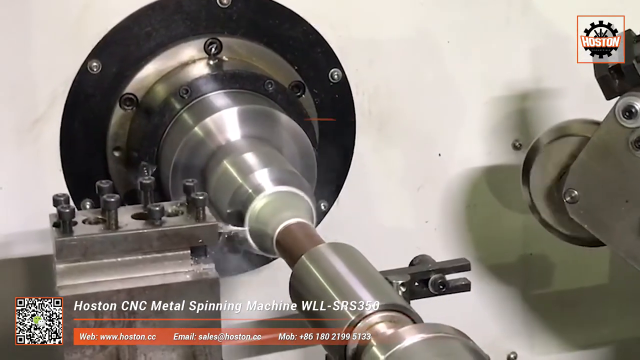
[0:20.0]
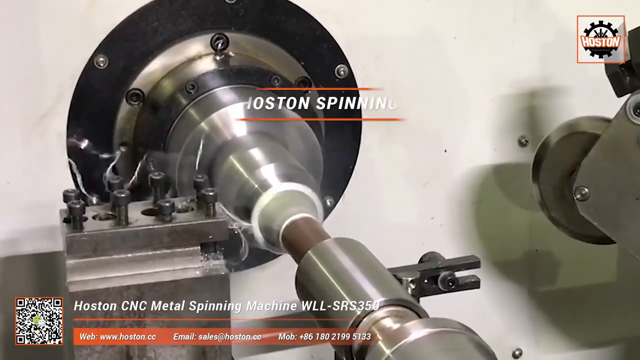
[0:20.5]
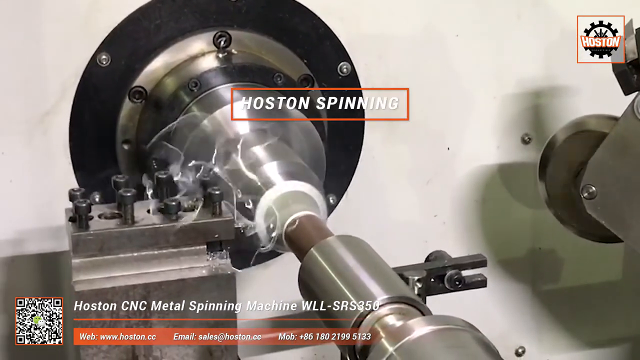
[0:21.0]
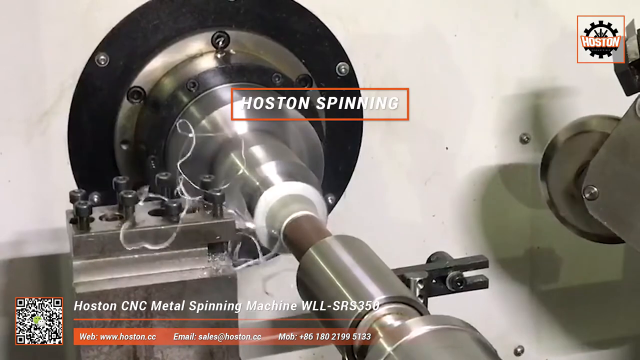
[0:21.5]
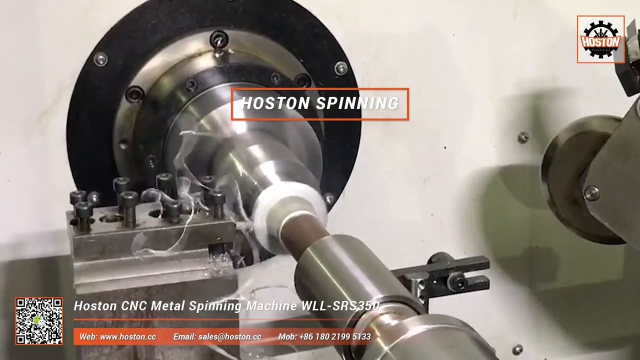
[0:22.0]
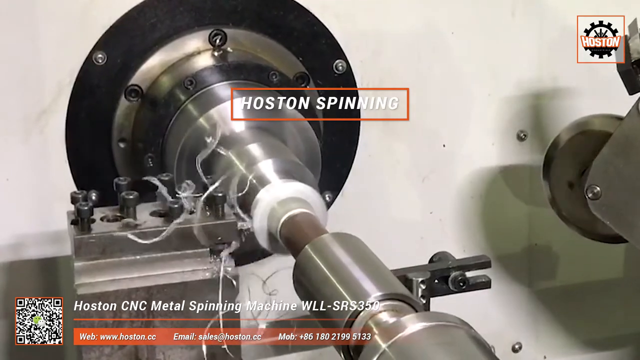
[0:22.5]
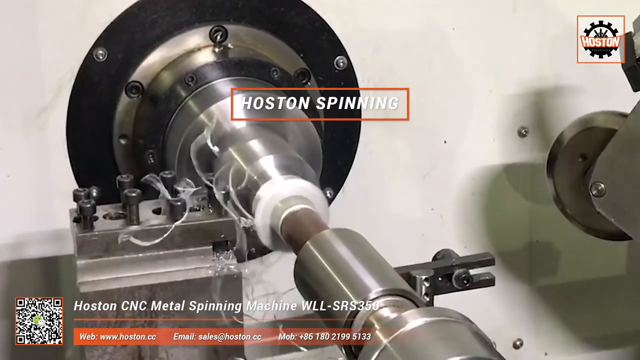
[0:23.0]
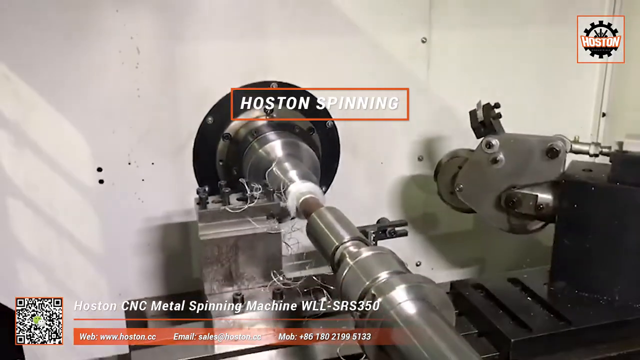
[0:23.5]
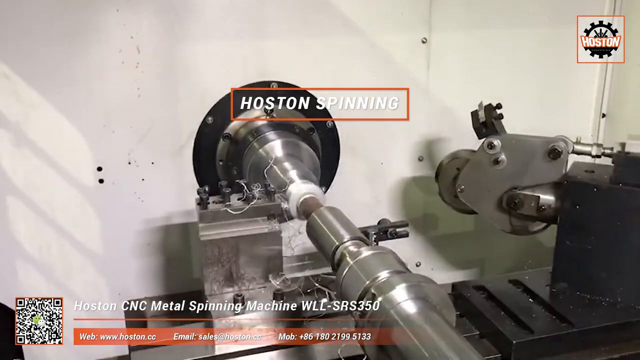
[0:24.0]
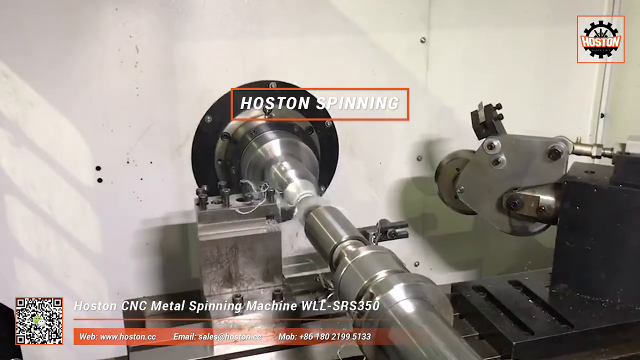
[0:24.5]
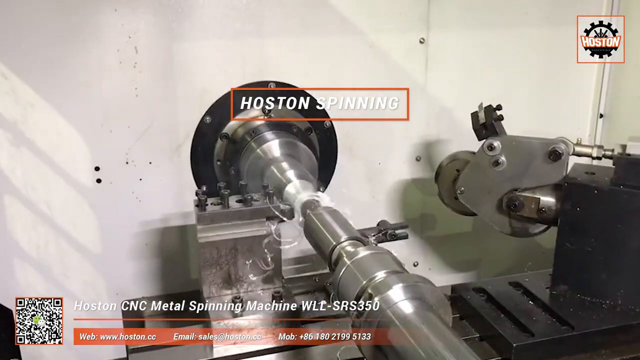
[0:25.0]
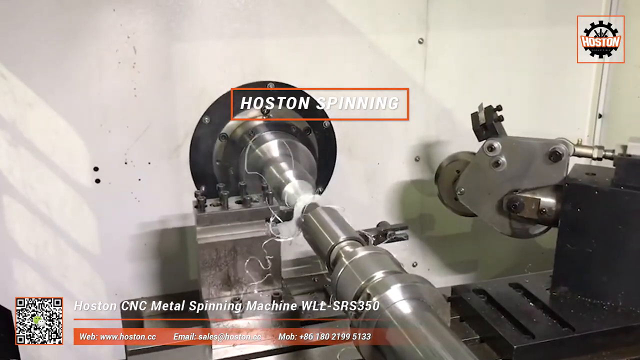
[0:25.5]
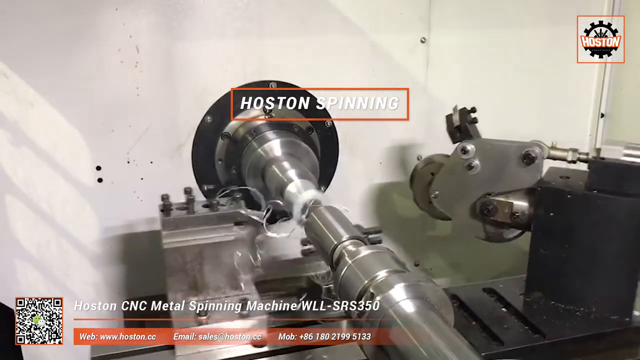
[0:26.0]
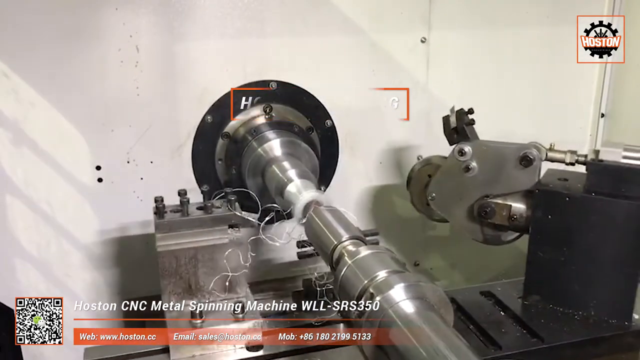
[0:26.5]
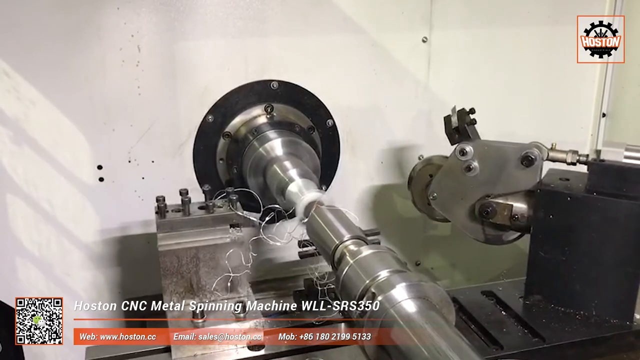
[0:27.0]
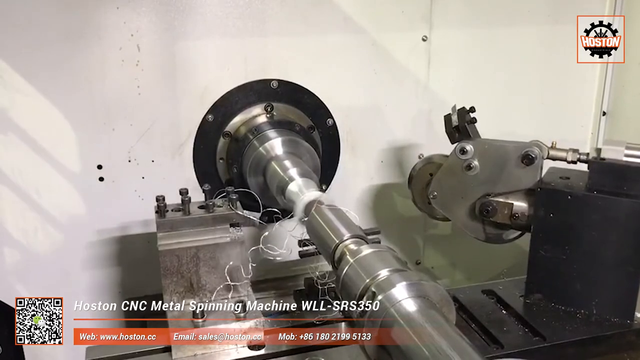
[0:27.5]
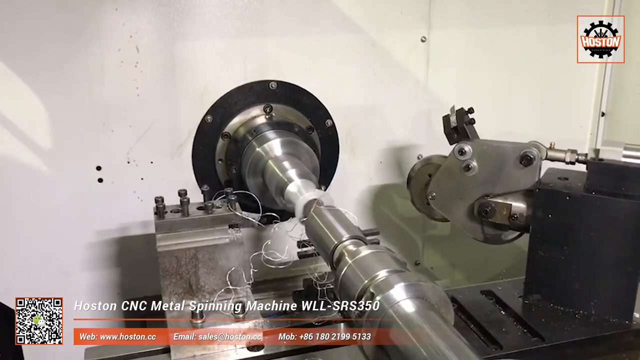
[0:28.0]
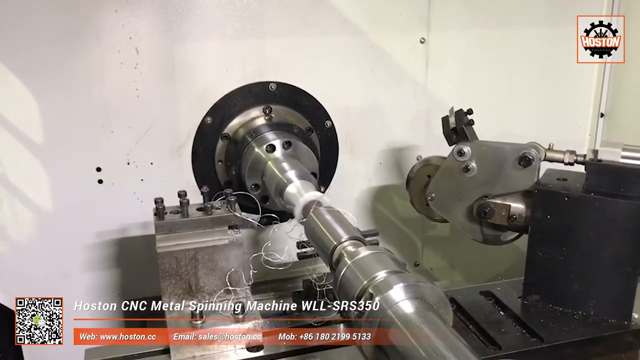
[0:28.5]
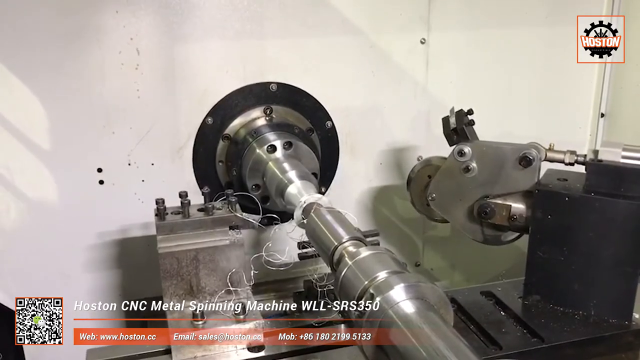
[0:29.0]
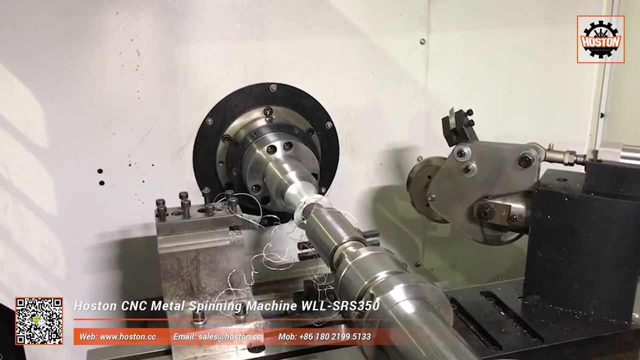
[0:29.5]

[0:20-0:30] In a close-up, a piece of pipe is being cut down by a spinning wheel; the surrounding environment cannot be seen. Little pieces of metal spin off as they are cut. On one side is what seems to be a non-moving device, just a piece of metal sticking out on the left side, and on the right side is a spinning wheel that cuts more deeply than the item on the left. The pipe itself spins between these two cutters, so the cuts are very different. The machinery is apparently able to cut to a very low tolerance.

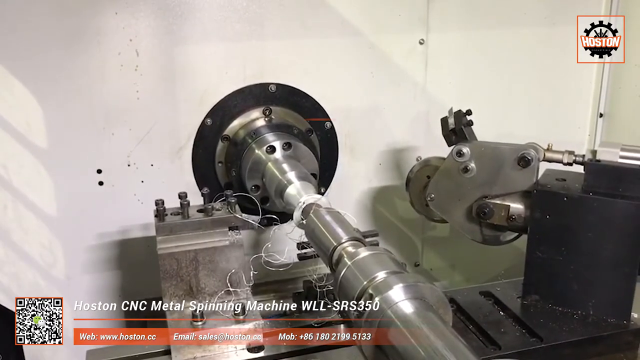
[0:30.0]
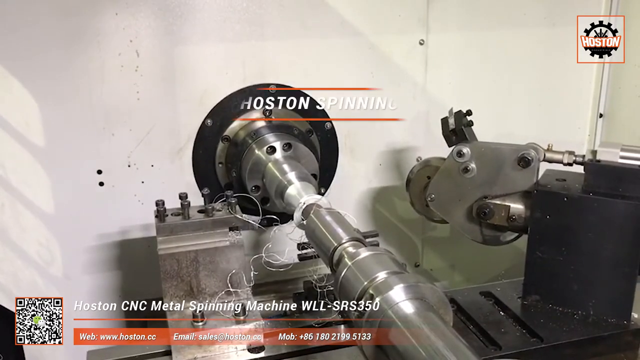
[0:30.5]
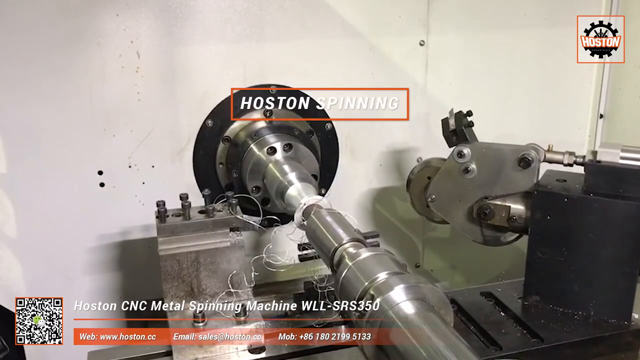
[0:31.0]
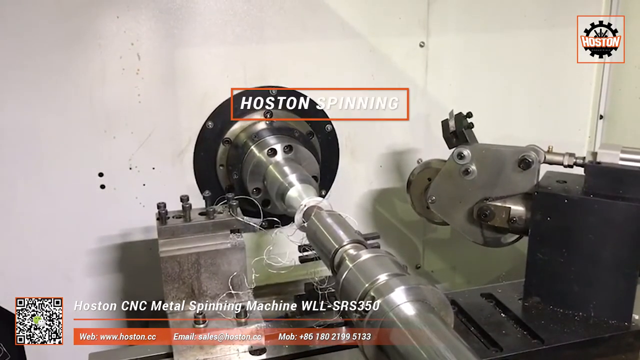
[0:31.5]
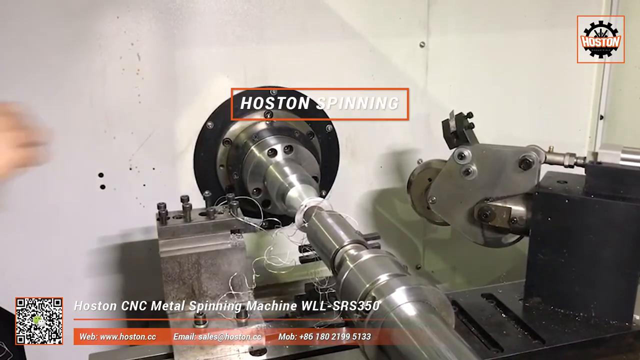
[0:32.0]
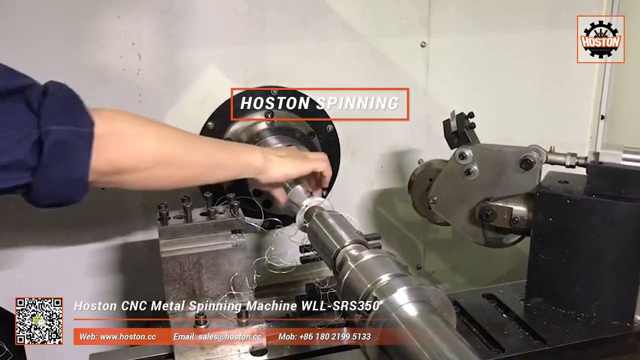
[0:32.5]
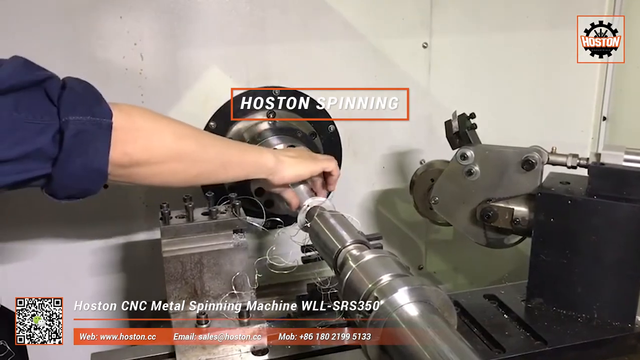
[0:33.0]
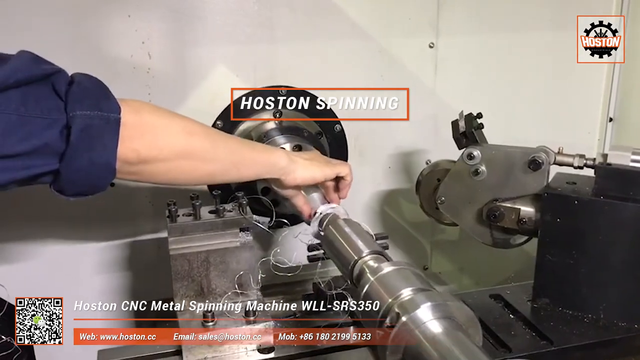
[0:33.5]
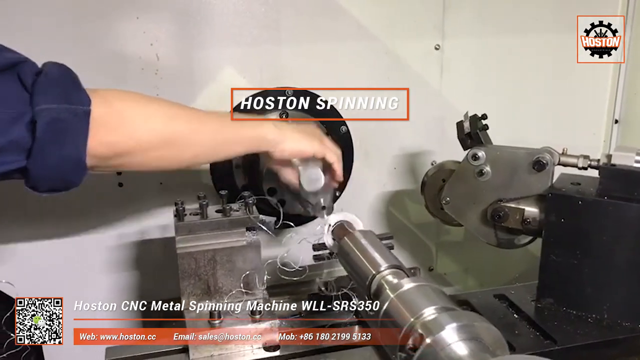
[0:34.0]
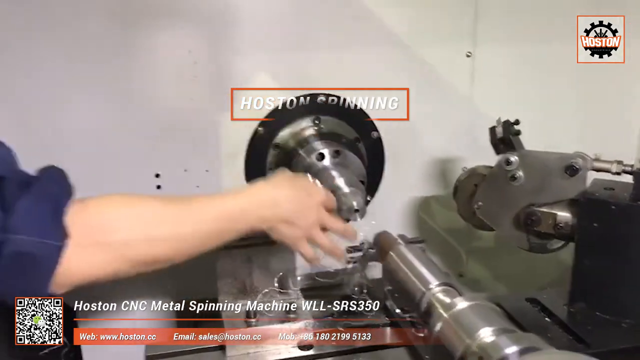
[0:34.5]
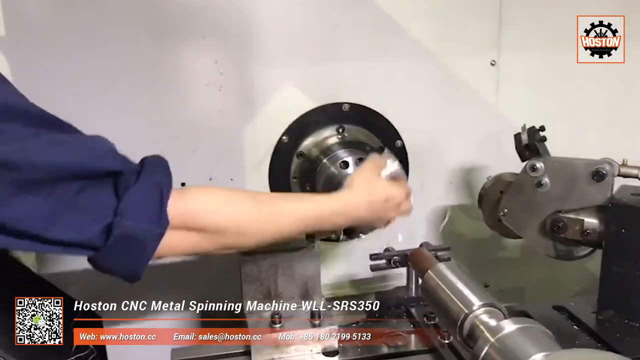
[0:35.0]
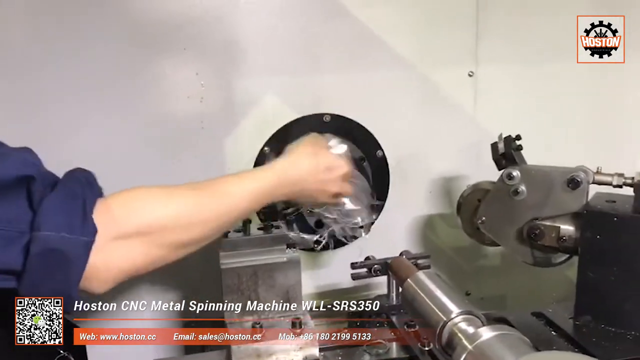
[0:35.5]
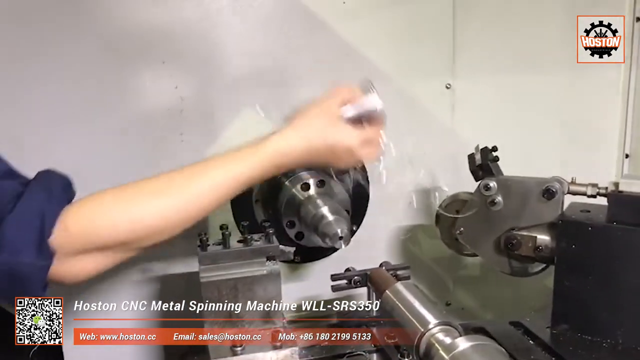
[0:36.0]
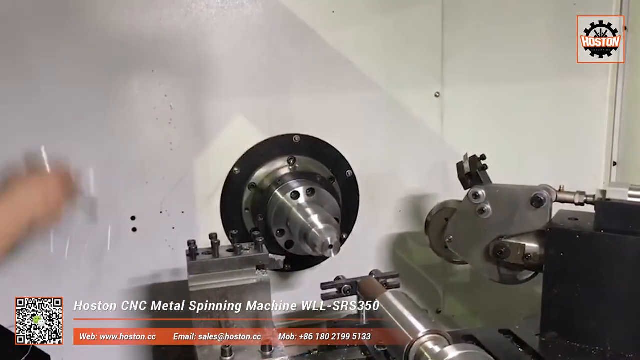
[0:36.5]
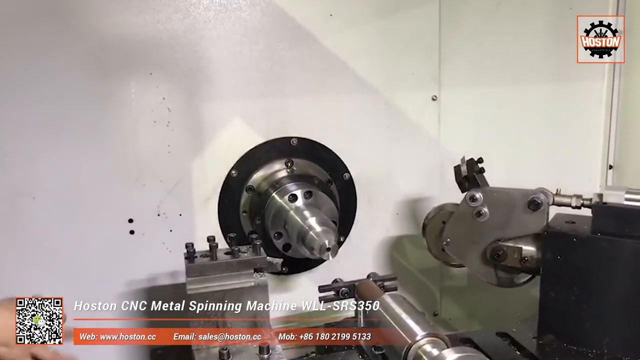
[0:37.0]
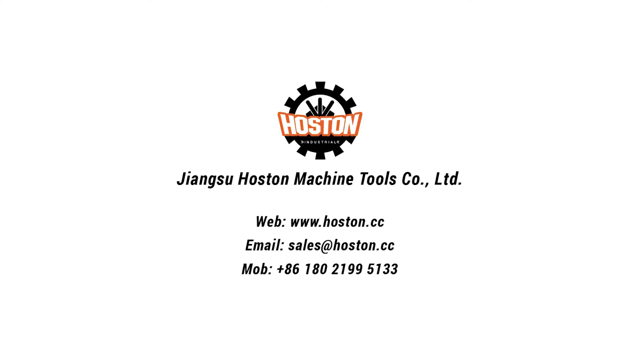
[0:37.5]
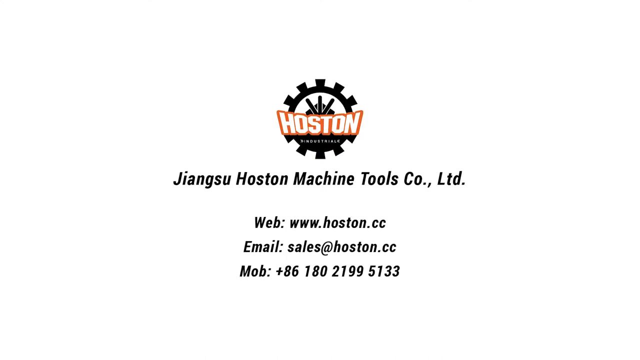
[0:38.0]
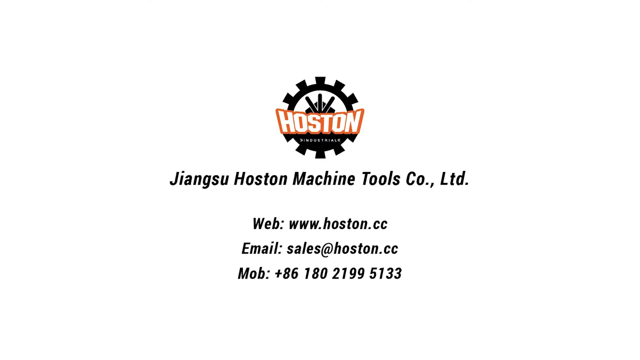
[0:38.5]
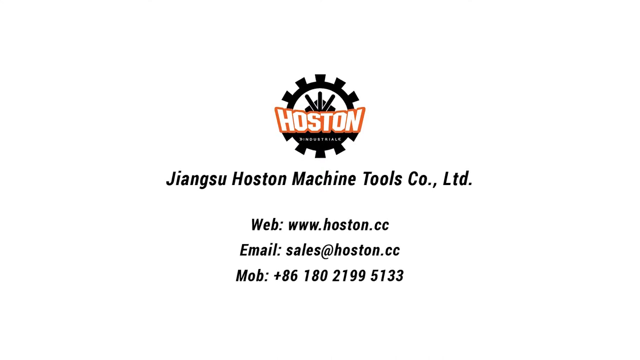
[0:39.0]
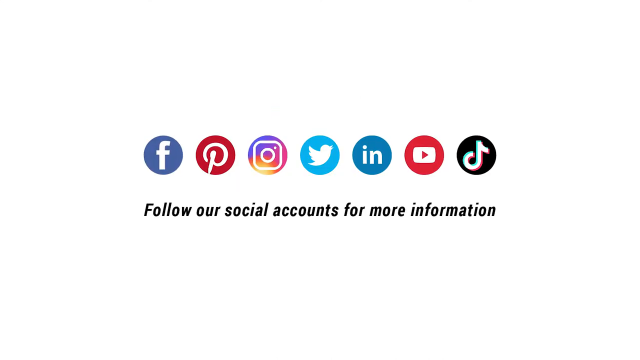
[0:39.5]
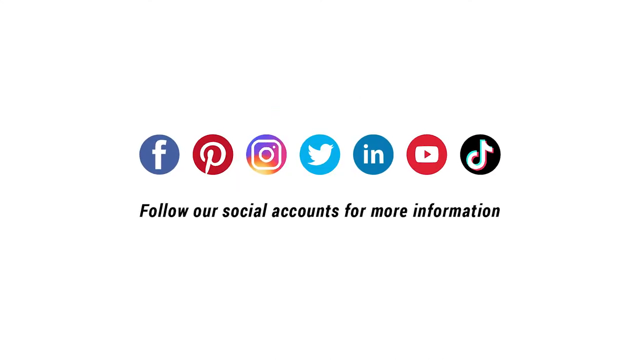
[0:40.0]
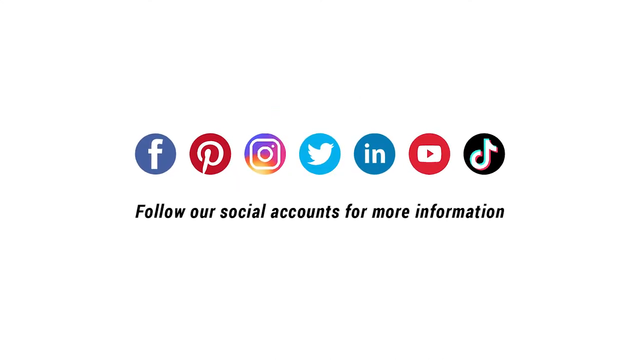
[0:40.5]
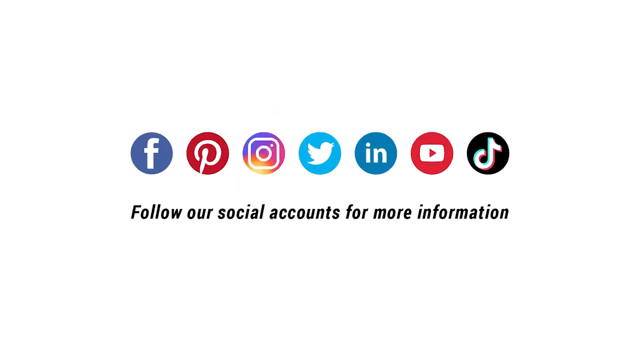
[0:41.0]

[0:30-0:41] The same machine is shown, and now a person's white hand and arm enter the frame and take the cut pipe out of the machine; this is the first time a human being appears. A white caption under the machine reads "Austin CNC metal spinning machine". The machine is apparently up for sale, with the video made to demonstrate how it works. The machine is partly enclosed by a white wall that might be a box, but the close-up shot shows nothing wider. The H-O-S-T-O-N logo is in the top right of the video.